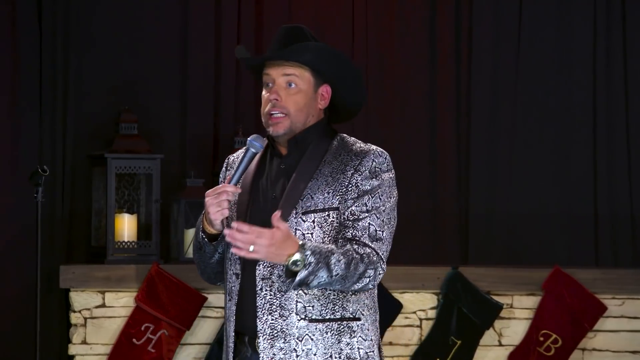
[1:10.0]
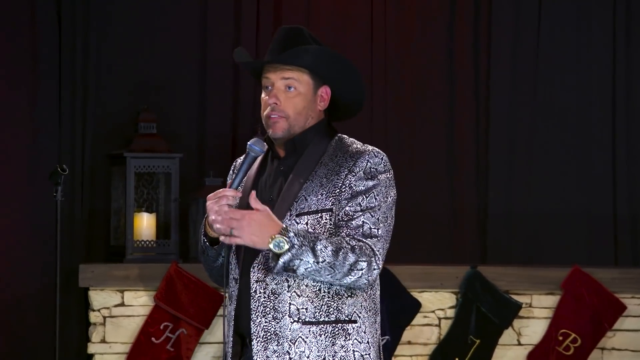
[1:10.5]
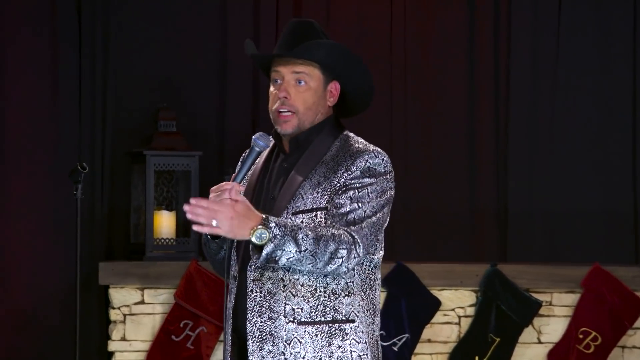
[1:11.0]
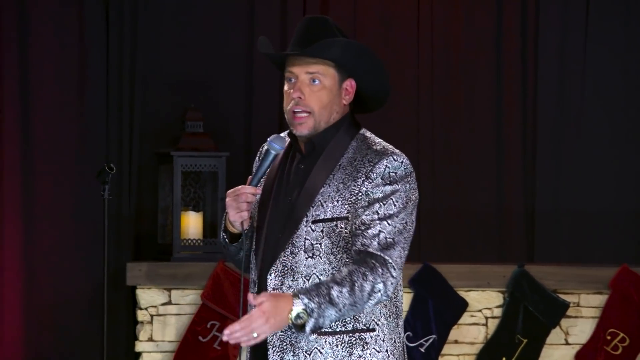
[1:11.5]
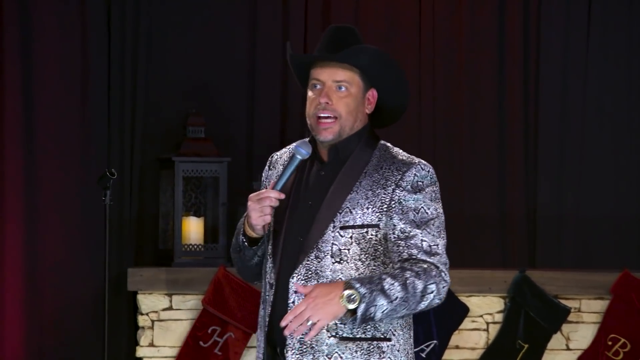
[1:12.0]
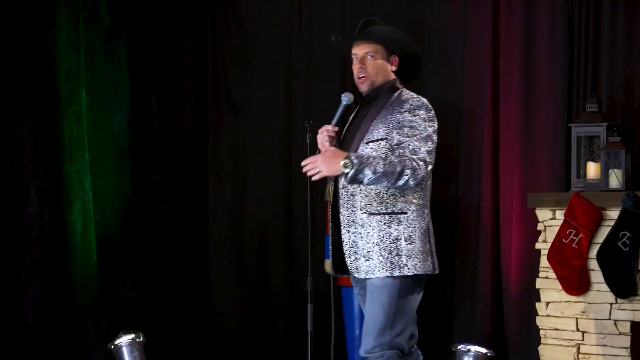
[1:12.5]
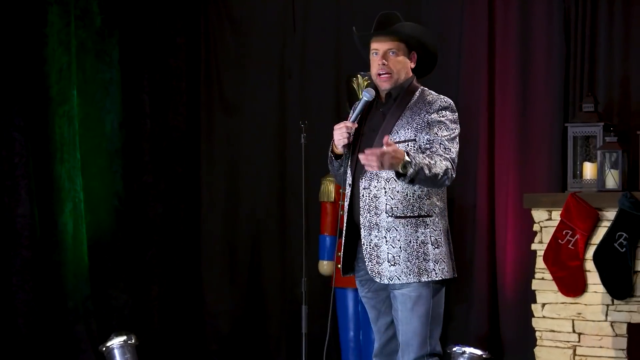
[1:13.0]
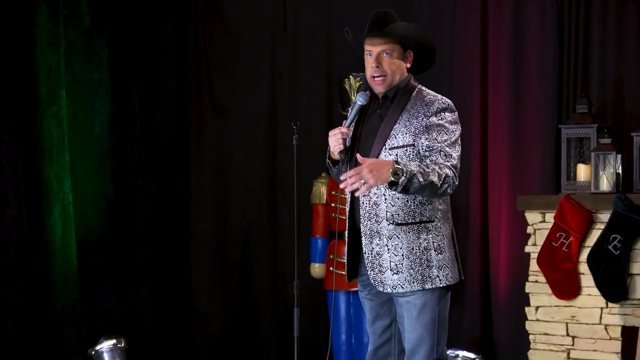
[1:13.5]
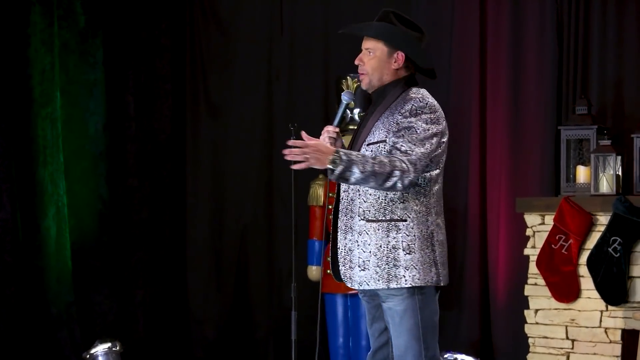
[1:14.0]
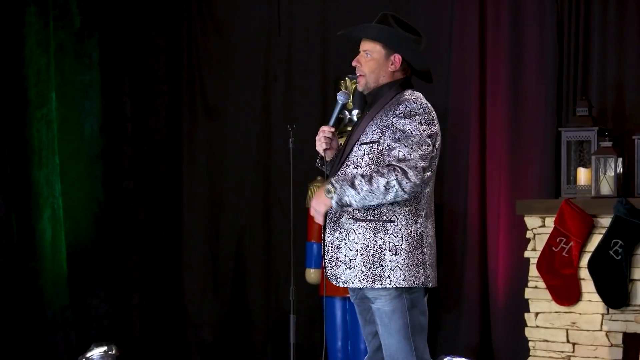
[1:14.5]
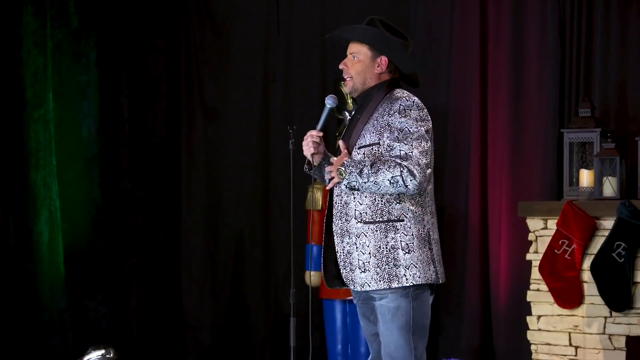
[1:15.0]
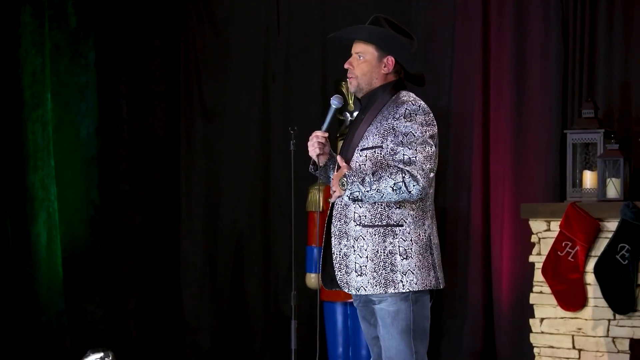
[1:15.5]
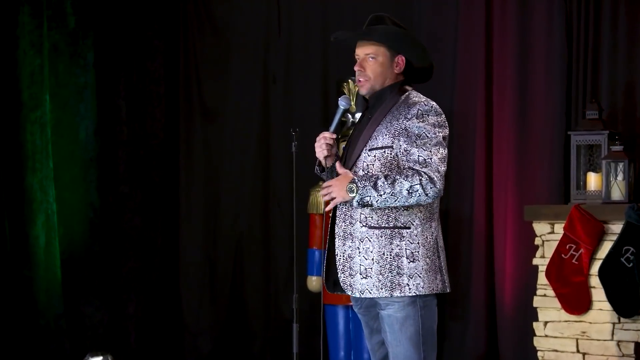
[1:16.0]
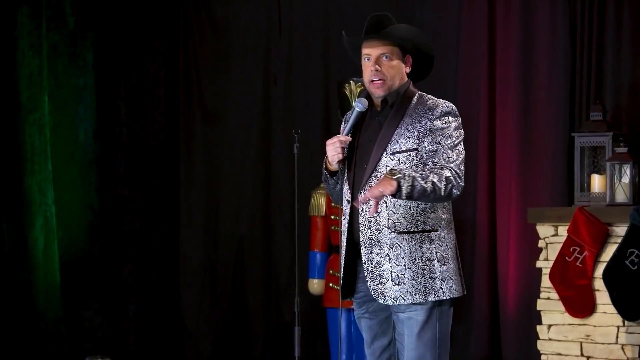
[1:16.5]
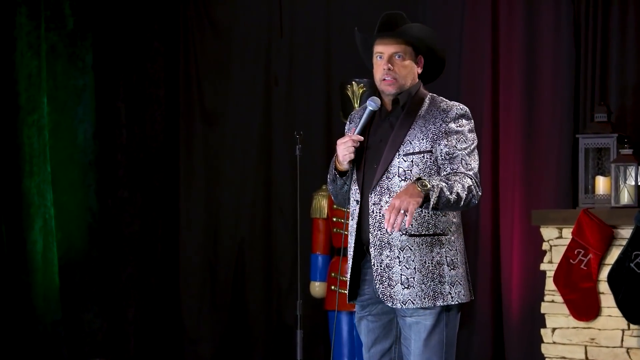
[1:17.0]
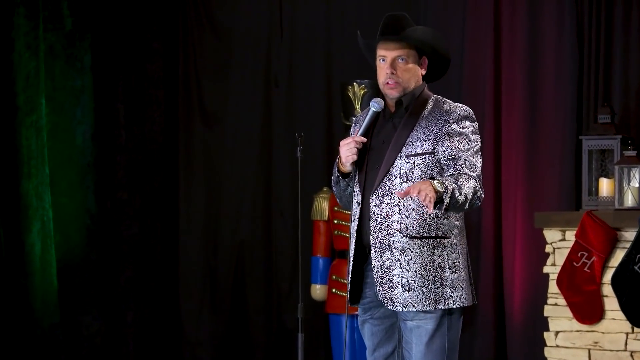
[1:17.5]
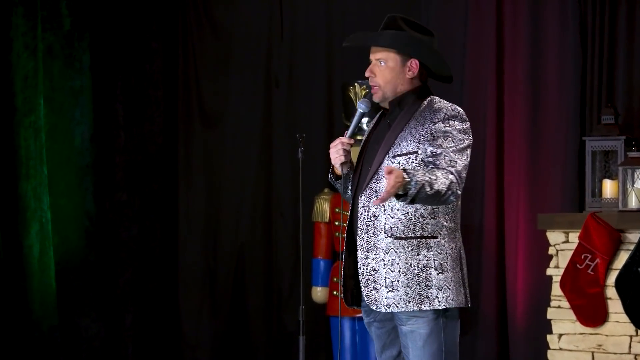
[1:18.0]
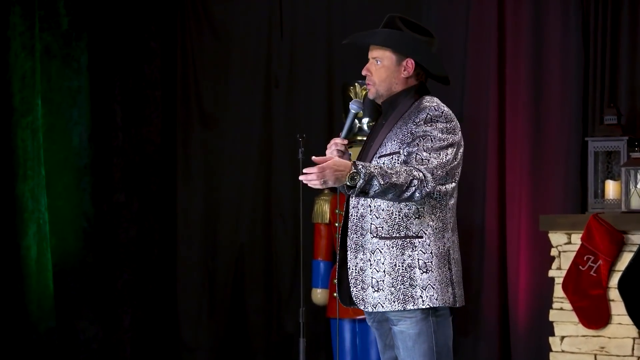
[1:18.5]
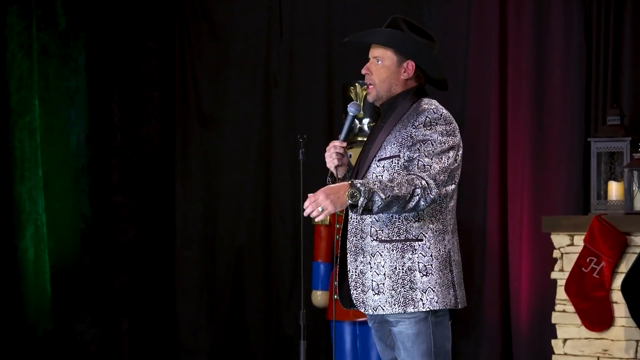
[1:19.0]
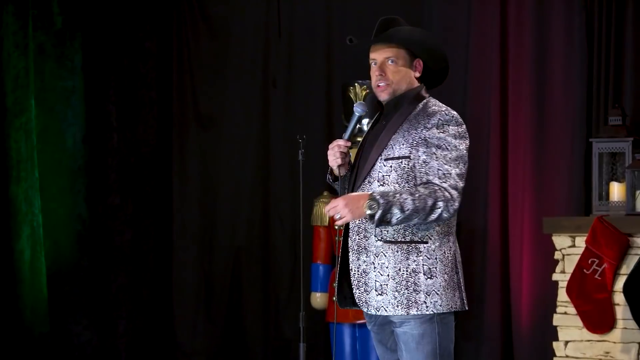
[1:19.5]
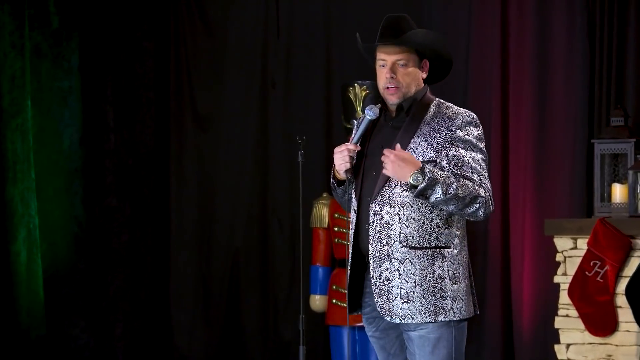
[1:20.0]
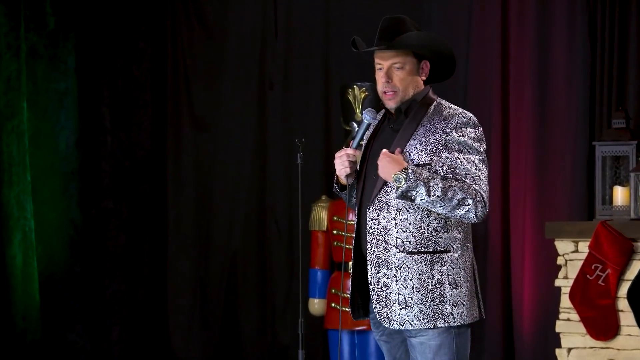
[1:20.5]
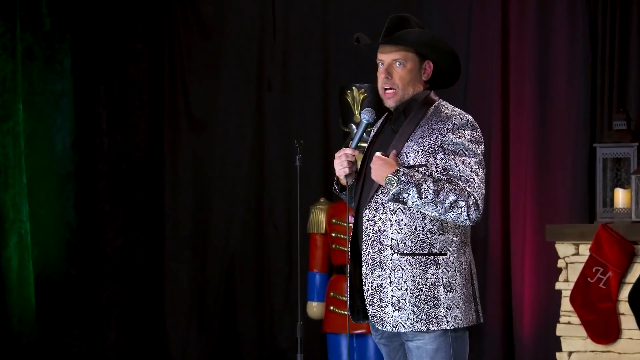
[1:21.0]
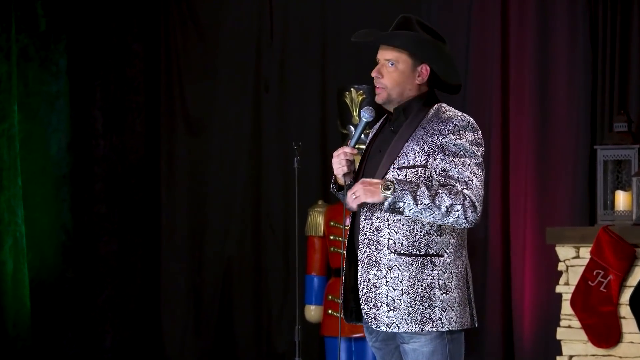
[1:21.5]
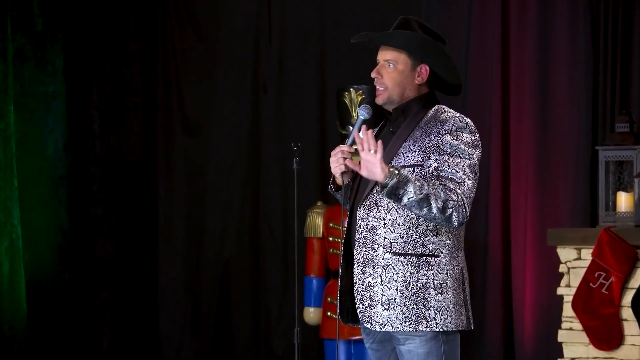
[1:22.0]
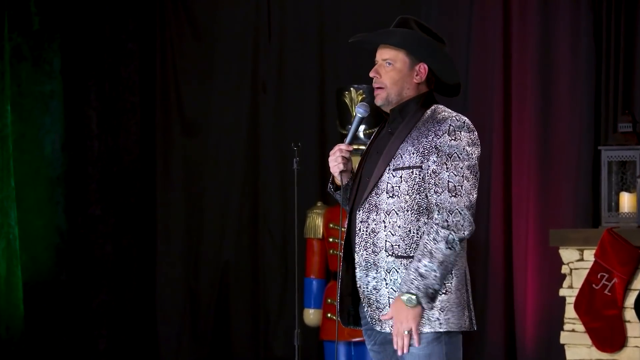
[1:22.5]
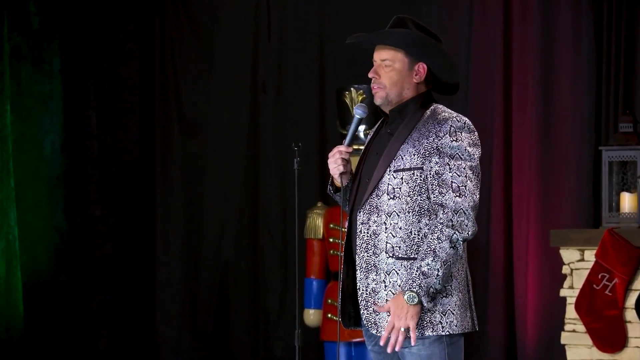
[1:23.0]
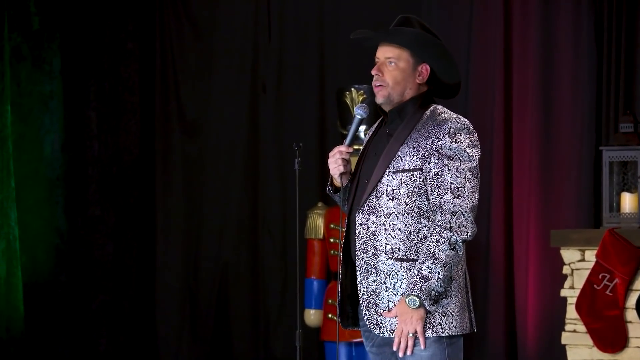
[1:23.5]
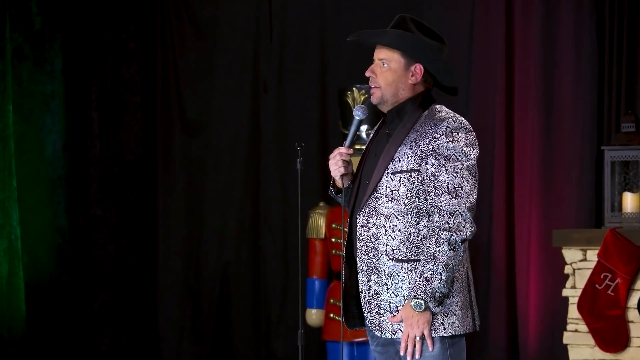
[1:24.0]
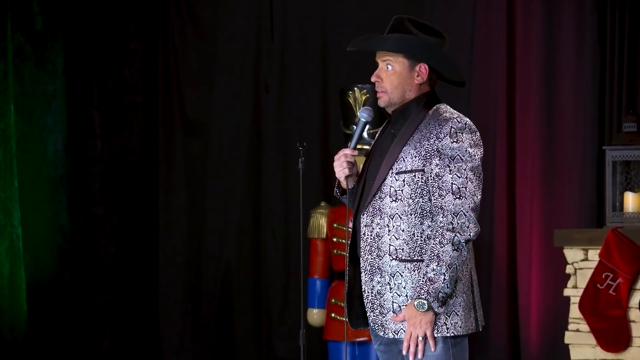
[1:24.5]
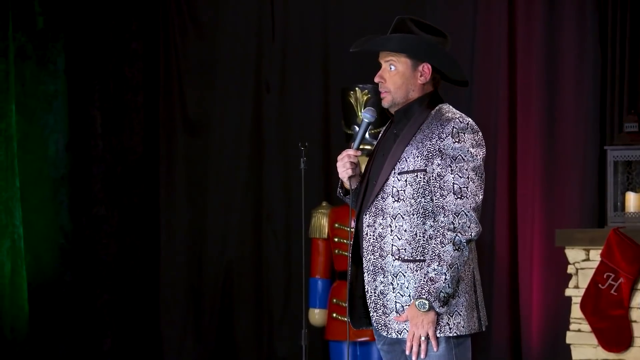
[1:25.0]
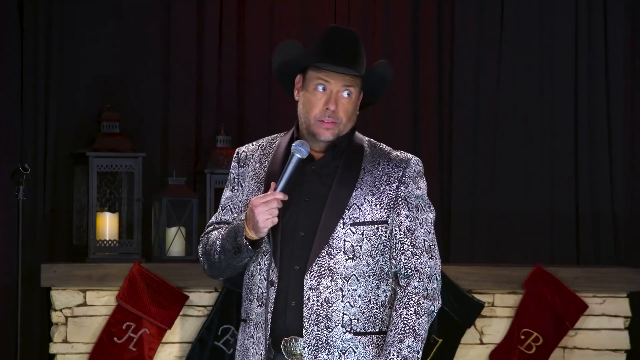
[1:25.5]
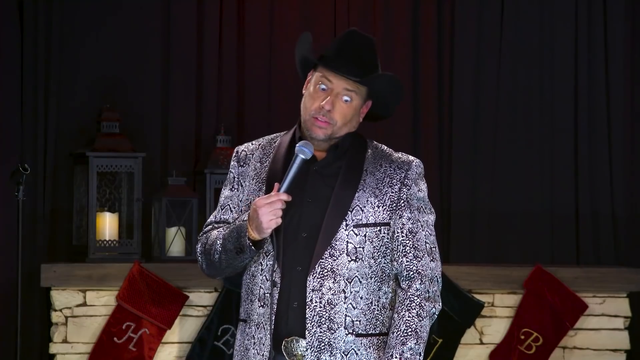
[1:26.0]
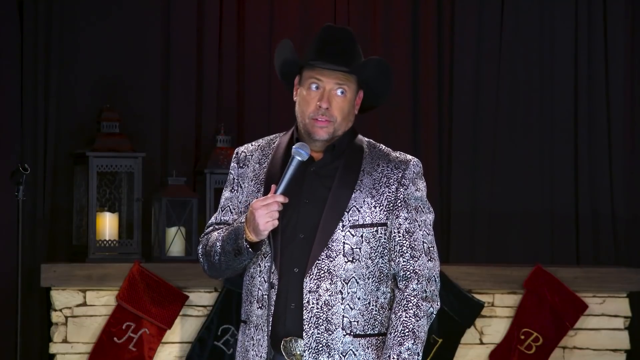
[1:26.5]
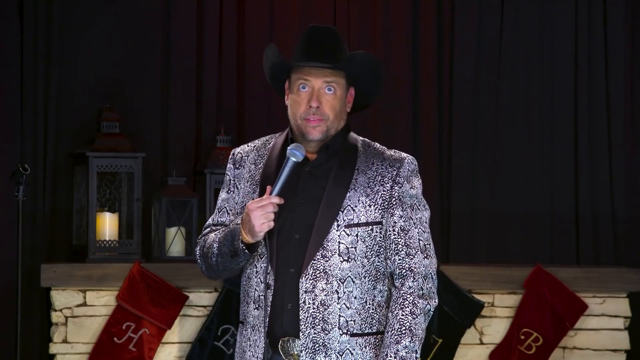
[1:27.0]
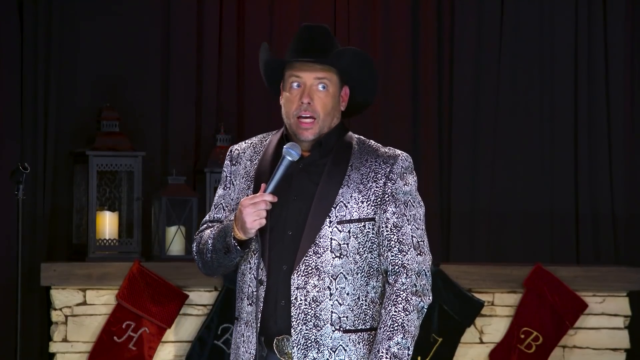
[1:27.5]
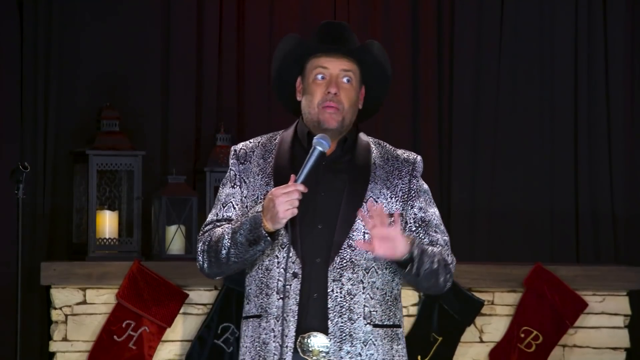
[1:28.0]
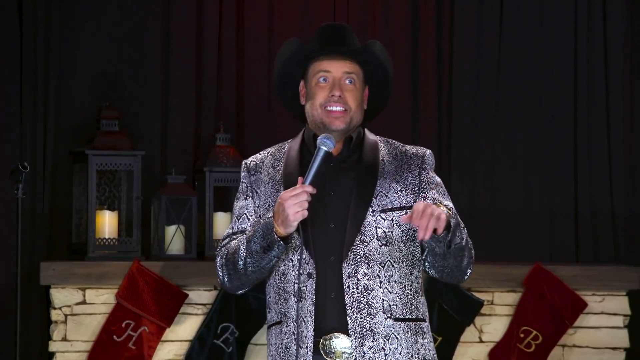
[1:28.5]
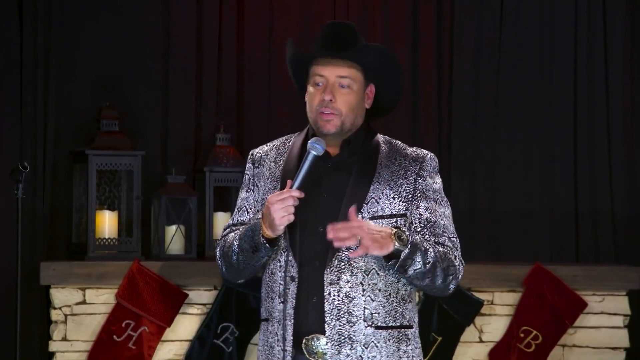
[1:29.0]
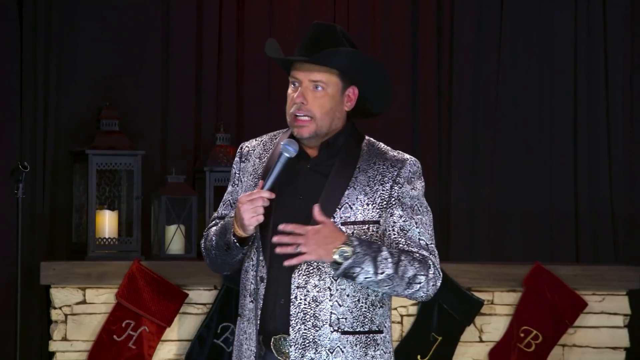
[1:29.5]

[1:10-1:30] The man is near the fireplace by the stage, wearing a gray jacket and a black shirt. He speaks into his microphone, which is made of metal and has a round top, and he wears his ring on the third finger of his left hand. The background behind him is a green curtain. The fireplace has three sets of black boxes with yellow objects and candles nearby; the candles do not appear to be lit. He wears an analog watch on his left hand with a round face and three bands. He appears to go near the wooden statue, and the red H sock on the right is shown near him.